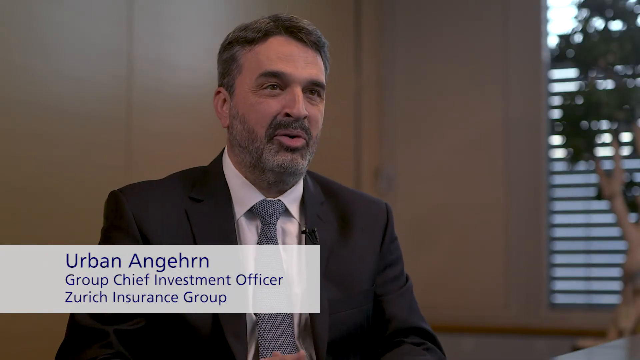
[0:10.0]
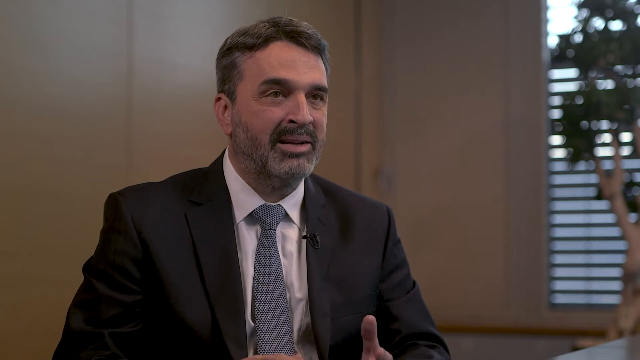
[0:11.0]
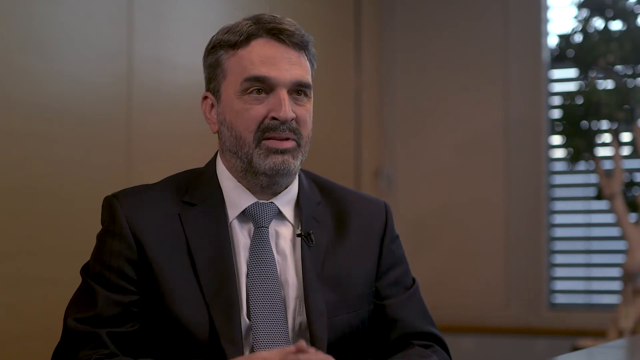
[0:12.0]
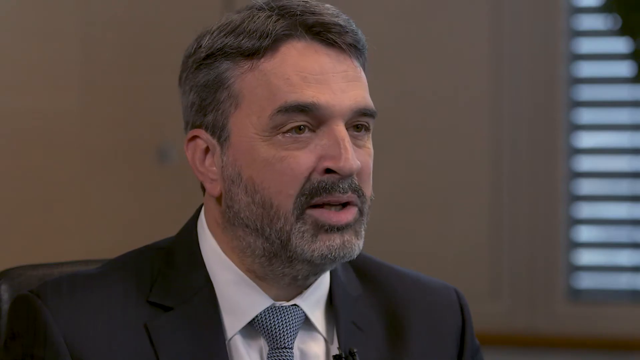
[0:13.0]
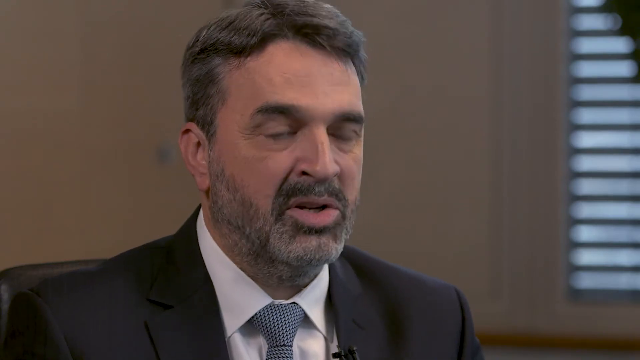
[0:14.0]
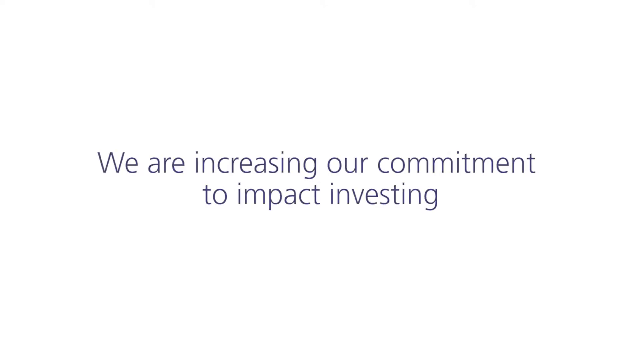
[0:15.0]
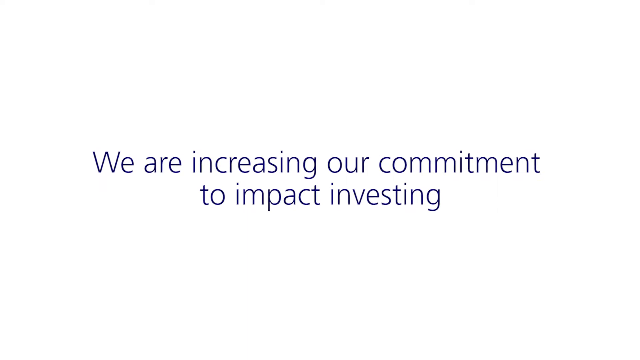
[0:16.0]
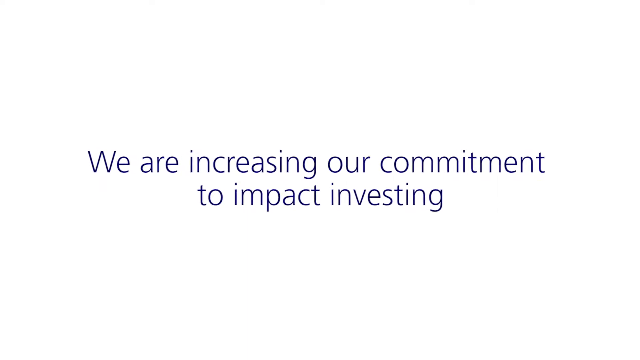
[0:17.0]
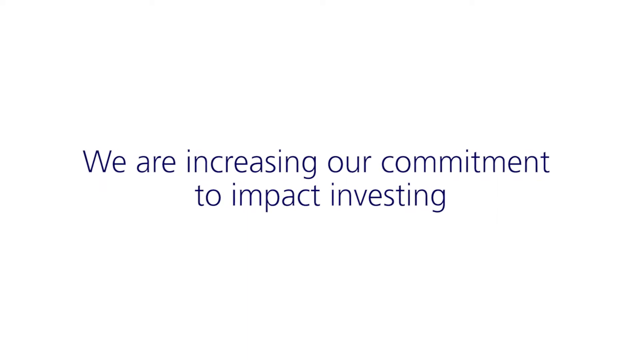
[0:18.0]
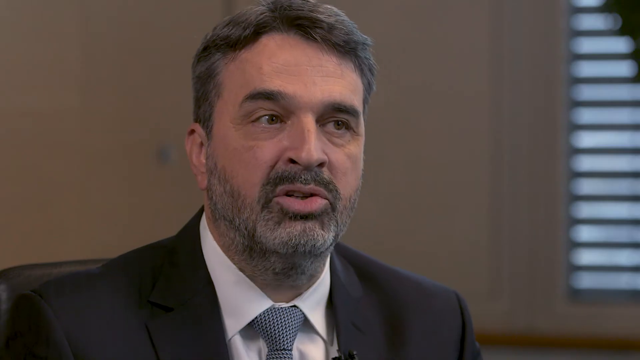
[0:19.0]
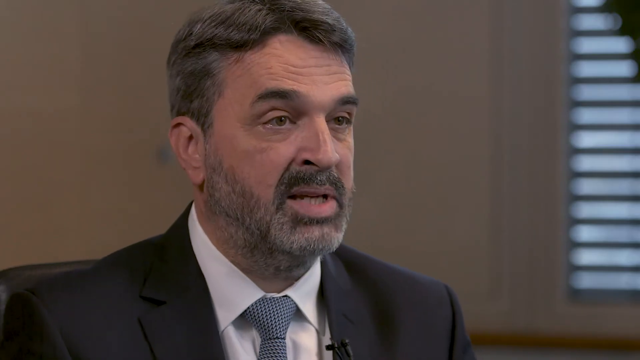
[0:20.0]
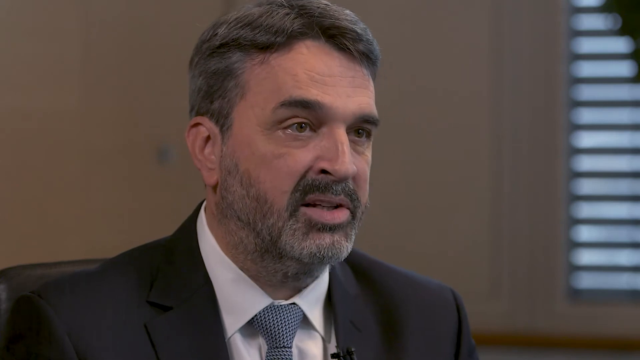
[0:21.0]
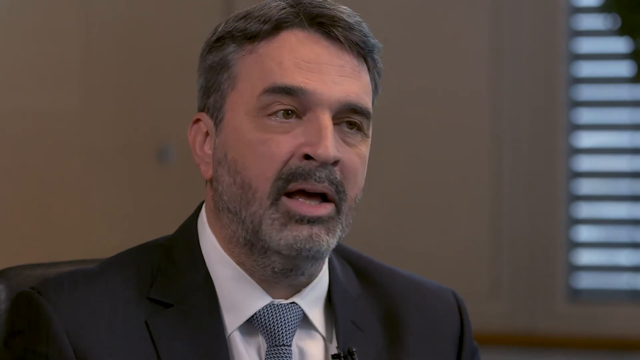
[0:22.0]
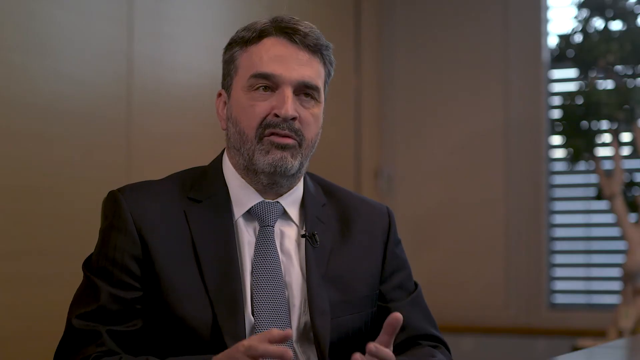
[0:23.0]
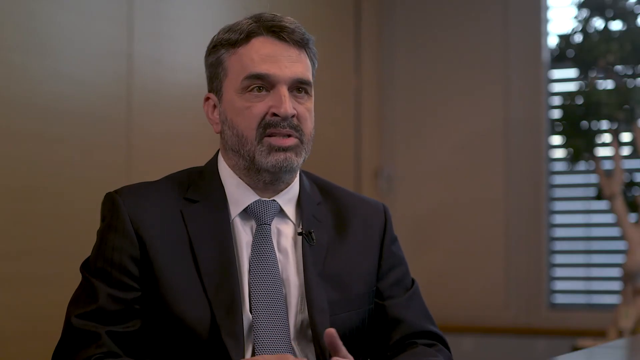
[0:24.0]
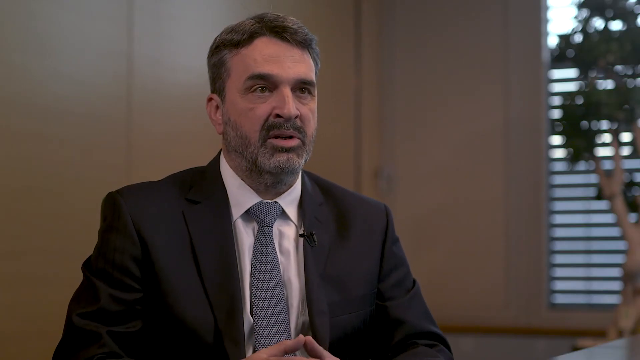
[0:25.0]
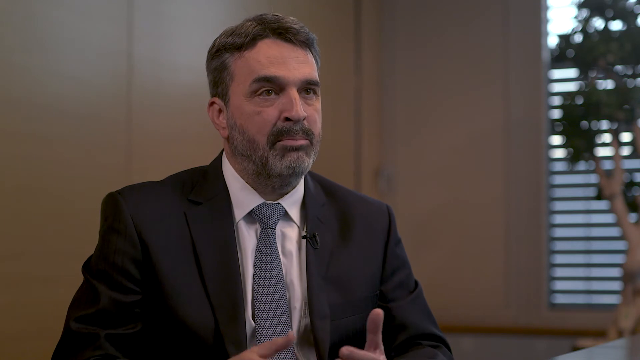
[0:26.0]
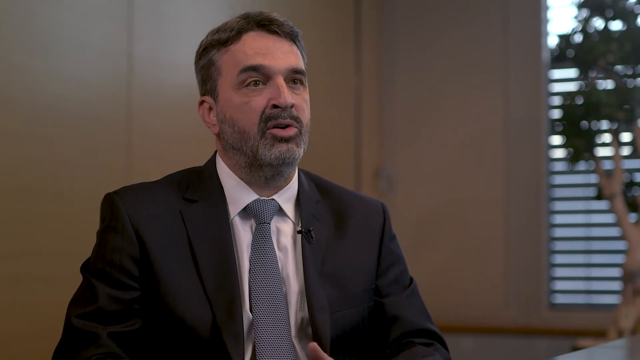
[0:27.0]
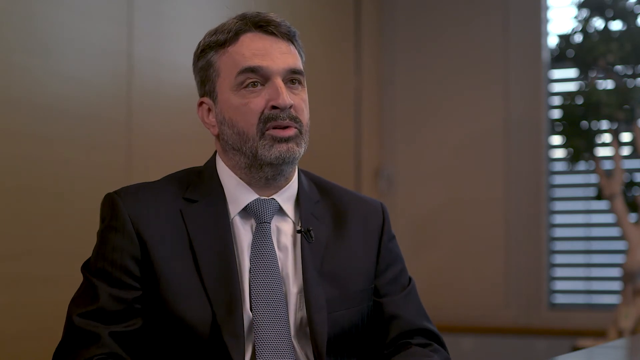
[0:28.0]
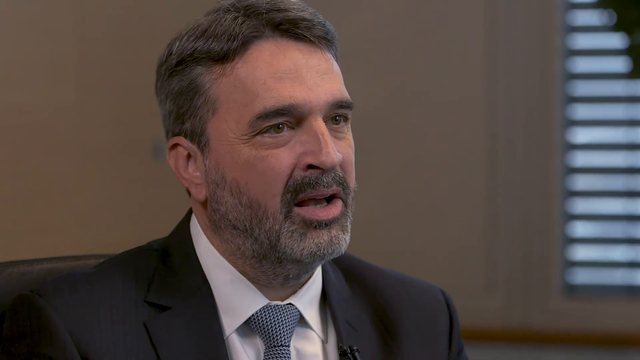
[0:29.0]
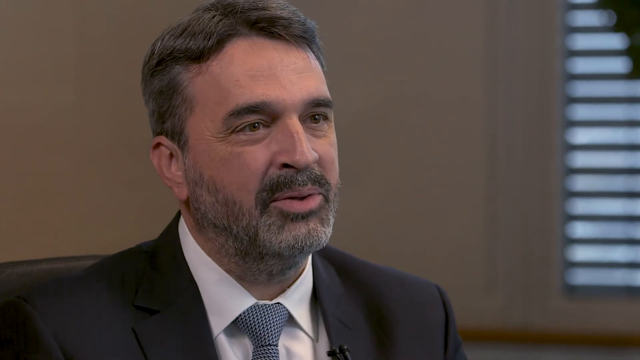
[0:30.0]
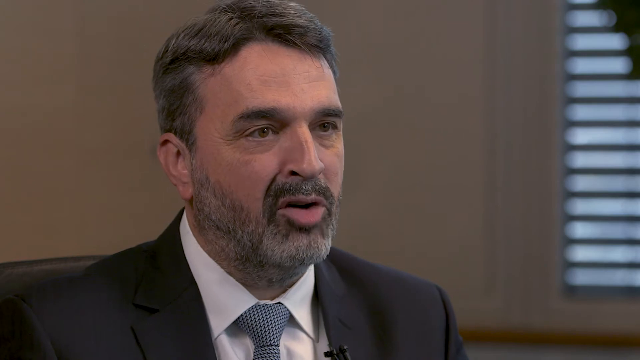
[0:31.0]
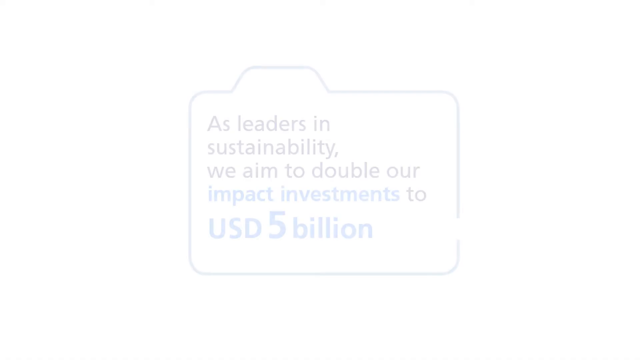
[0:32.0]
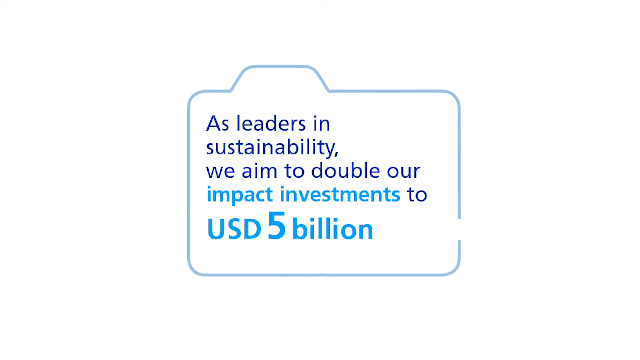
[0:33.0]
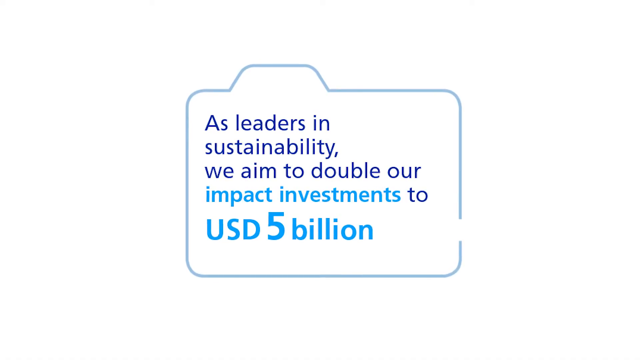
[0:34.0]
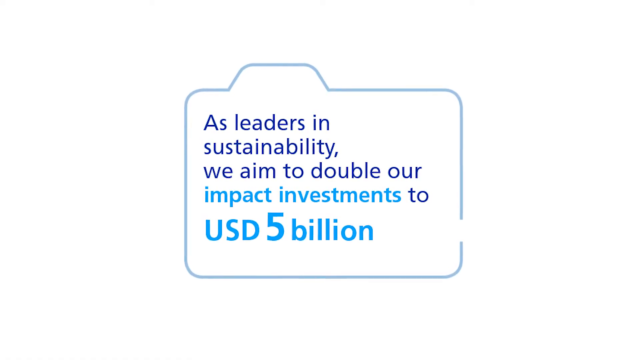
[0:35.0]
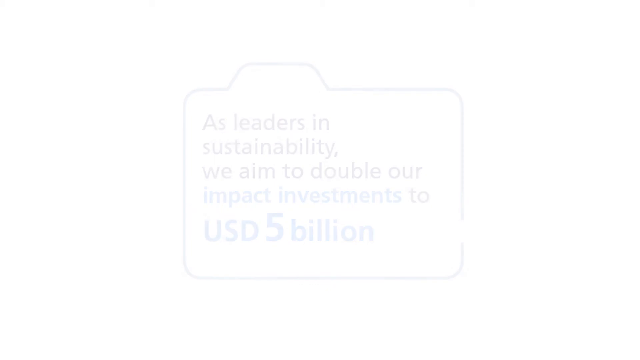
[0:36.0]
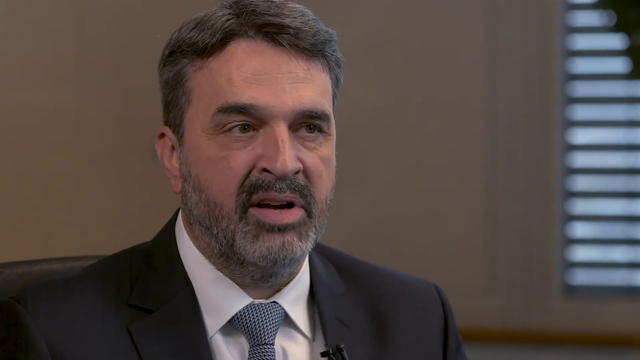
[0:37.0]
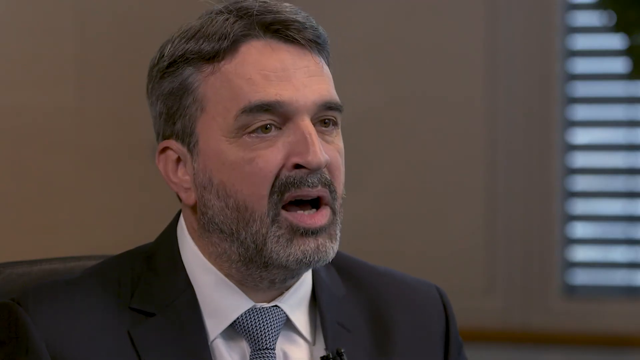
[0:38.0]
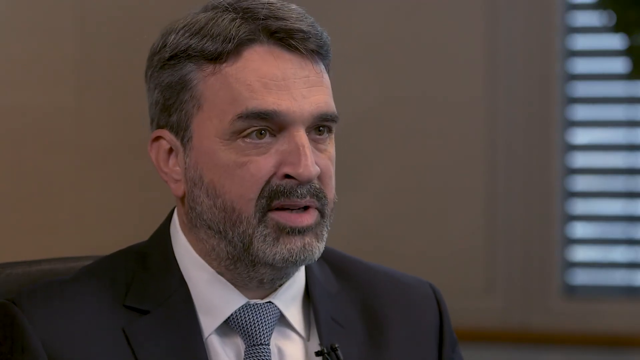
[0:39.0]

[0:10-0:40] A man appears to be interviewed in his office. The wall behind him appears taupe and is made up of sections, with three sections visible. There is a window covered with wood blinds, and on the right side of the frame there is a large potted plant, more like a large potted tree. The man speaks to an interviewer who is not visible, looking straight ahead at them. As he speaks he raises his left and right hands and moves them up and down, continuing to gesture, then places his hands back down on the desk in front of him. The scene changes to the words "we are increasing our commitment to impact investing". Then the man is shown speaking again in a more zoomed-in view, revealing salt-and-pepper hair and a salt-and-pepper mustache and beard. He raises his eyebrows with different expressions and slightly moves his head from side to side, looking like he really believes in what he is saying.